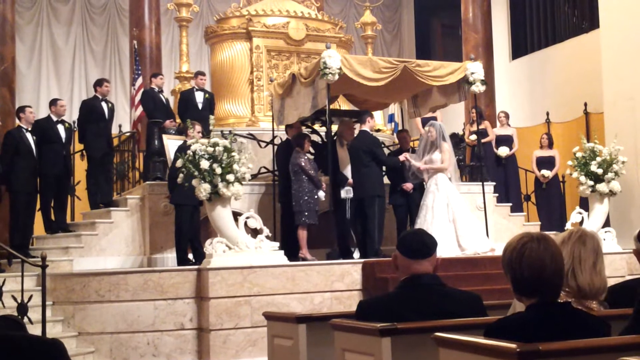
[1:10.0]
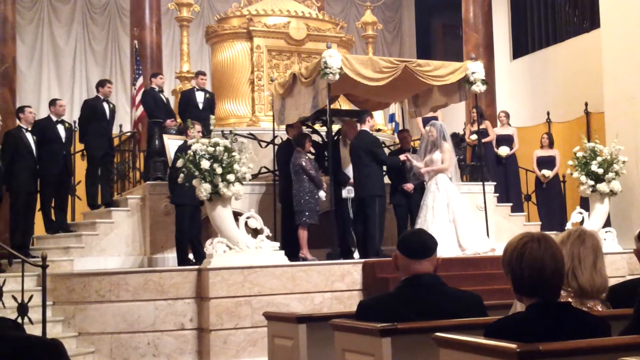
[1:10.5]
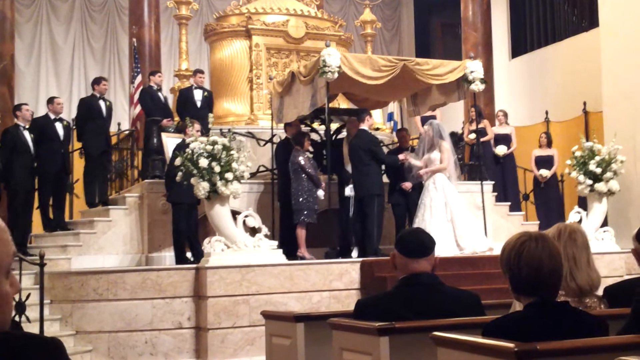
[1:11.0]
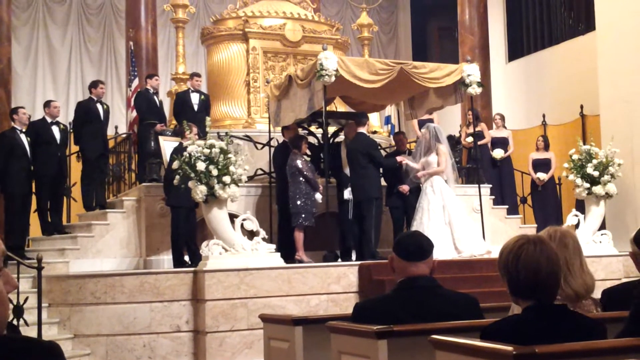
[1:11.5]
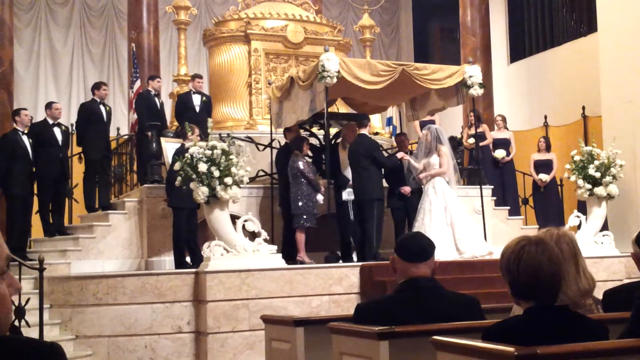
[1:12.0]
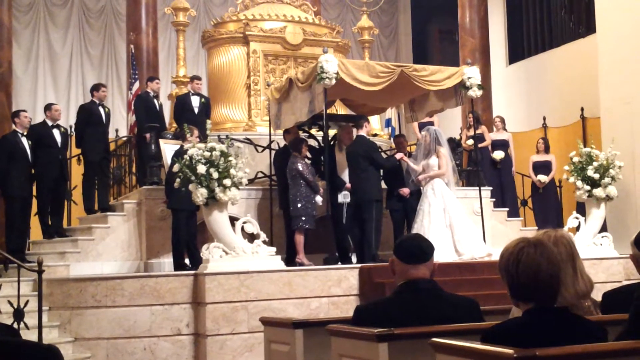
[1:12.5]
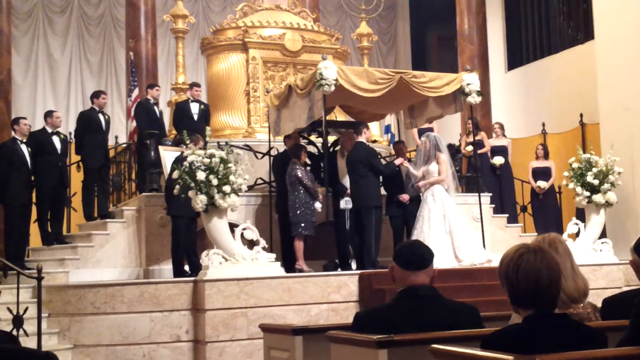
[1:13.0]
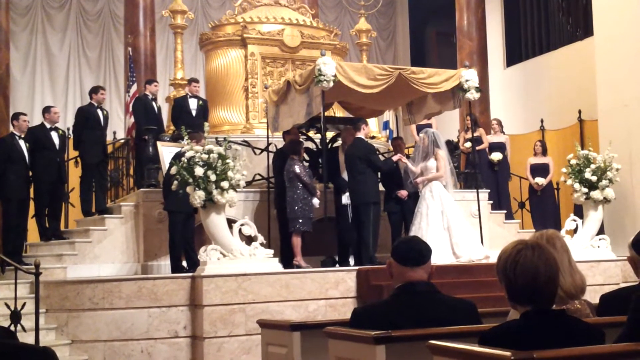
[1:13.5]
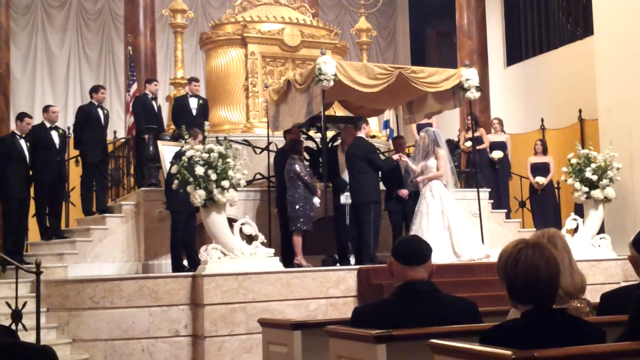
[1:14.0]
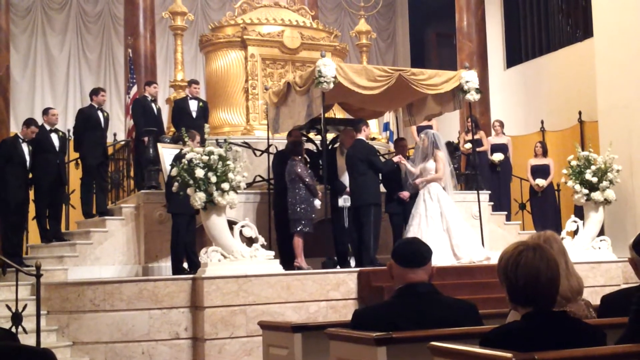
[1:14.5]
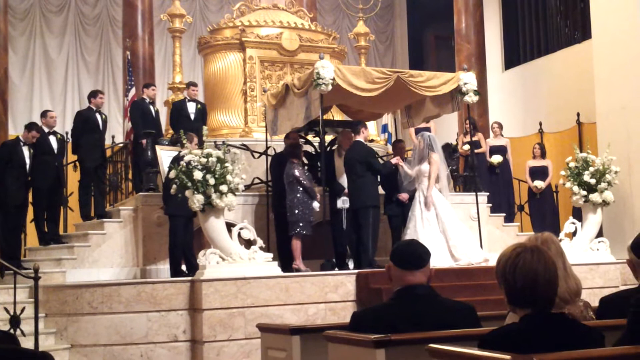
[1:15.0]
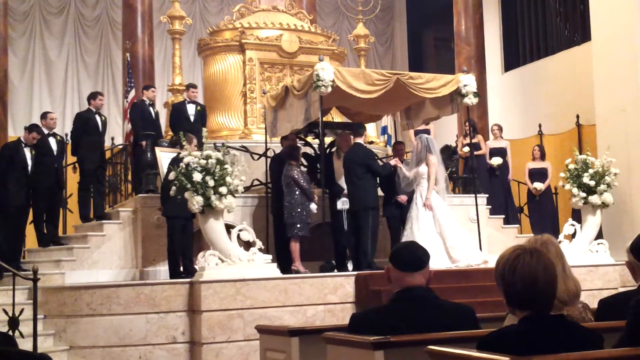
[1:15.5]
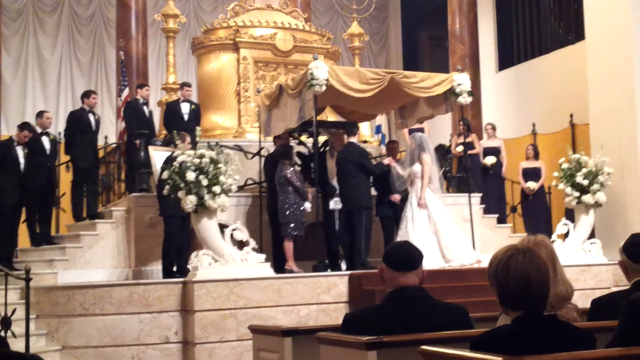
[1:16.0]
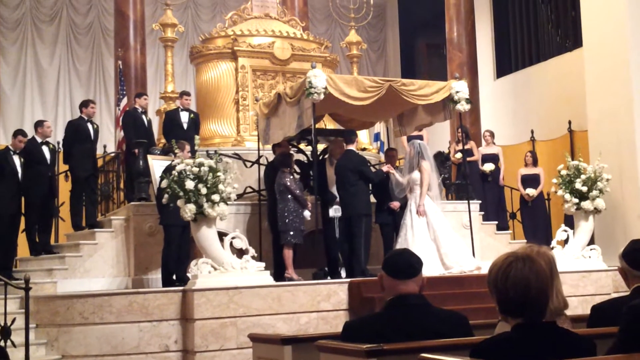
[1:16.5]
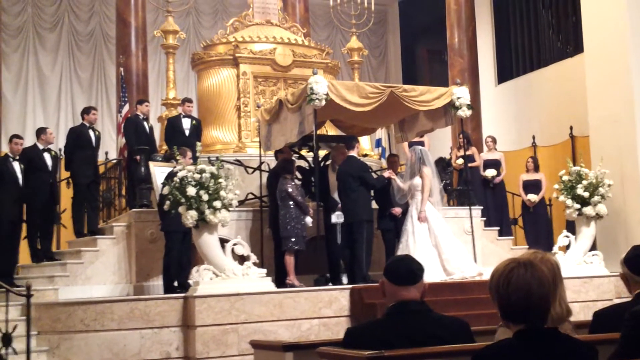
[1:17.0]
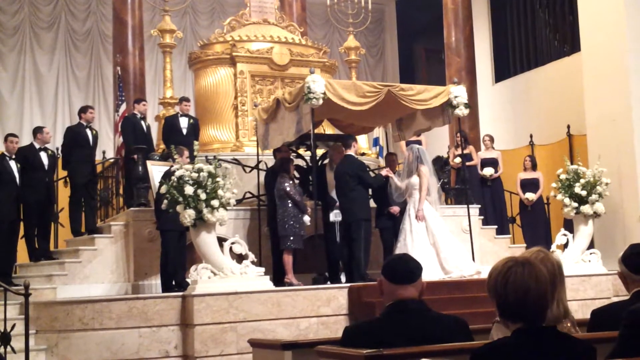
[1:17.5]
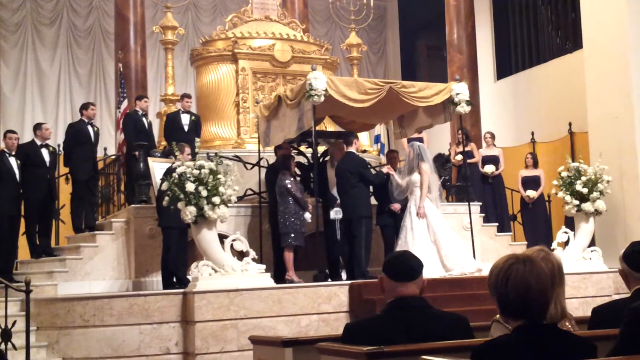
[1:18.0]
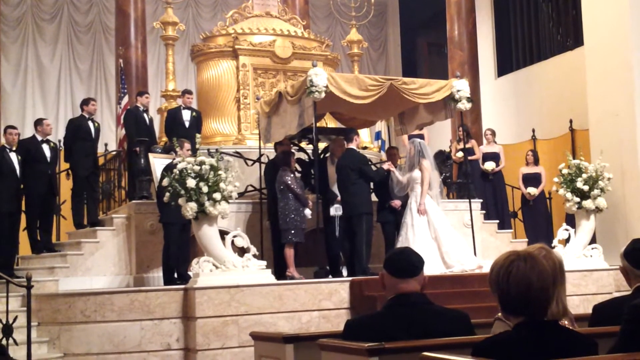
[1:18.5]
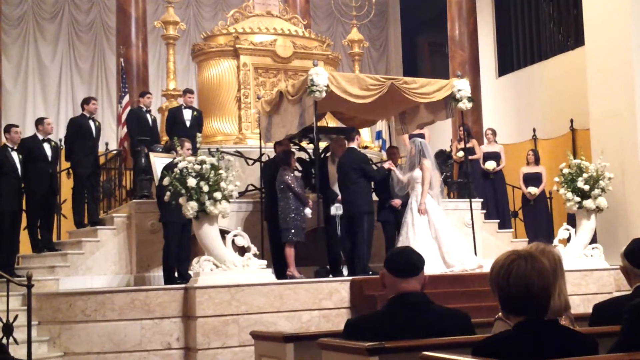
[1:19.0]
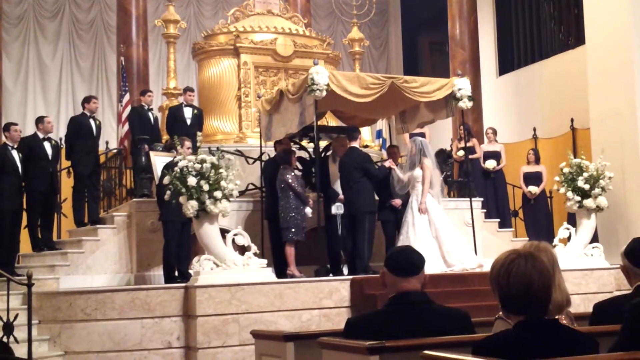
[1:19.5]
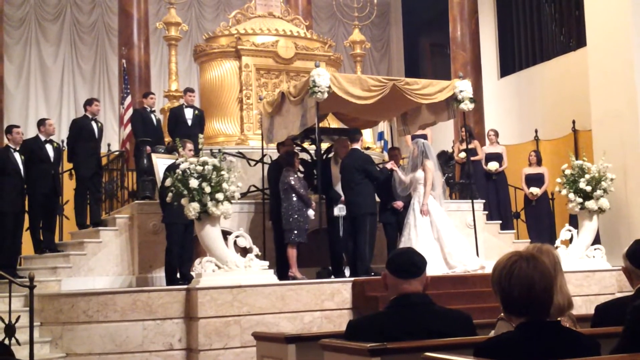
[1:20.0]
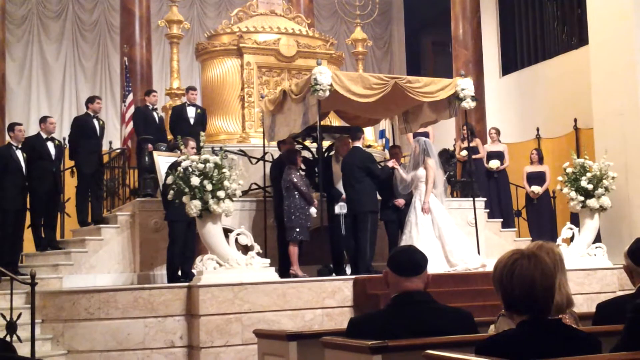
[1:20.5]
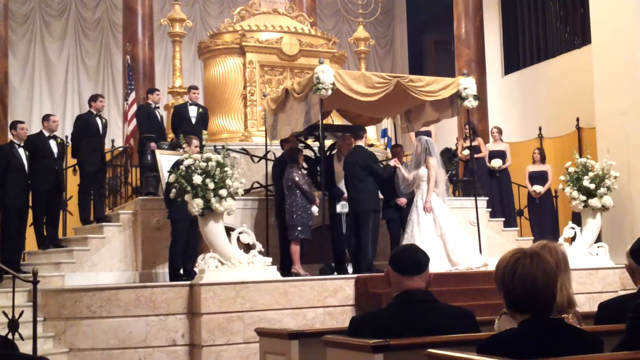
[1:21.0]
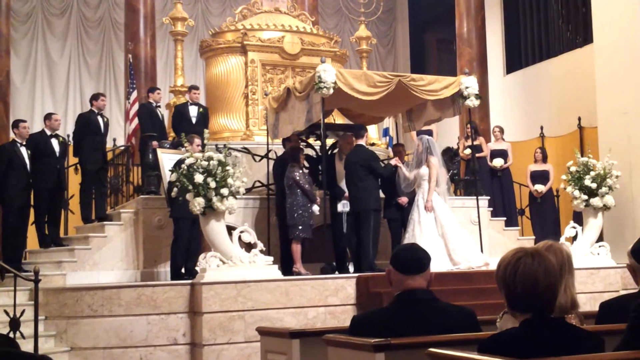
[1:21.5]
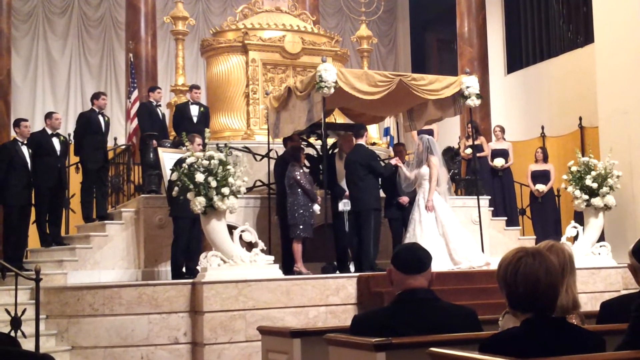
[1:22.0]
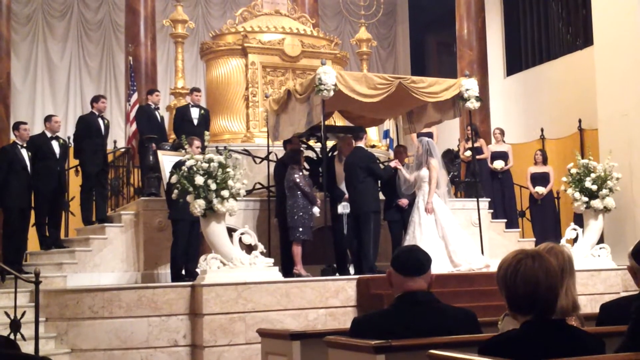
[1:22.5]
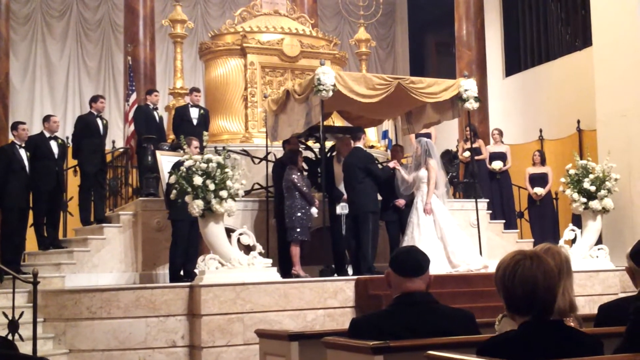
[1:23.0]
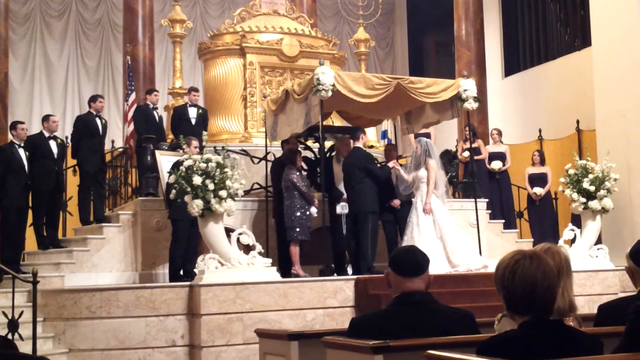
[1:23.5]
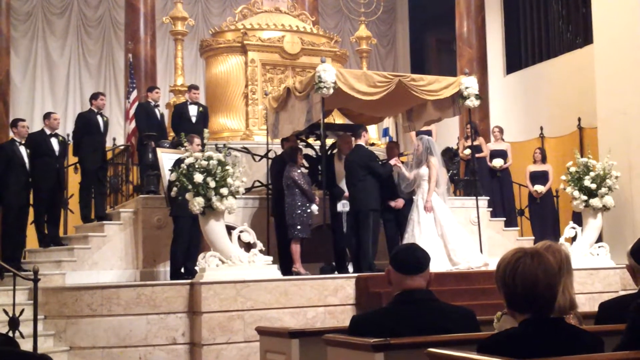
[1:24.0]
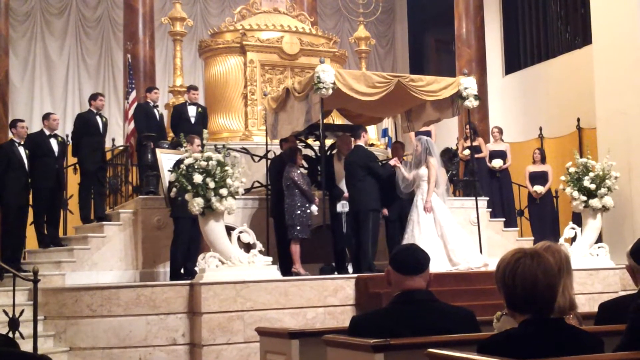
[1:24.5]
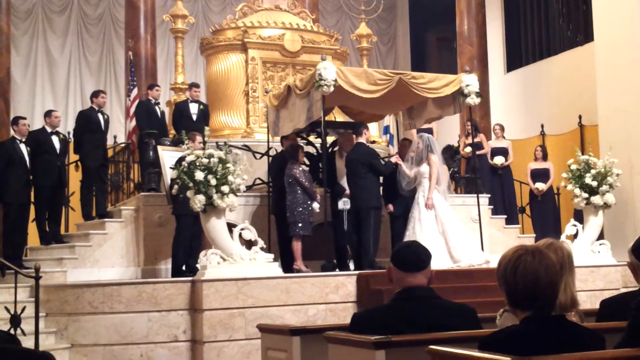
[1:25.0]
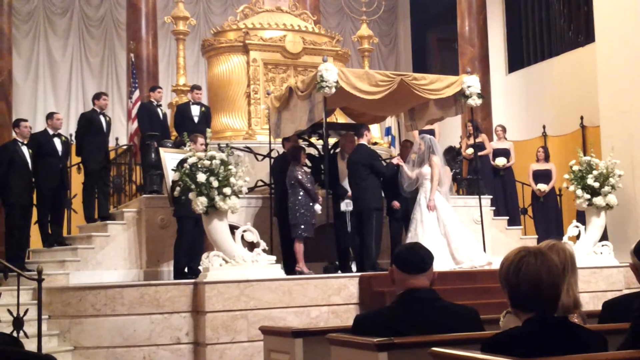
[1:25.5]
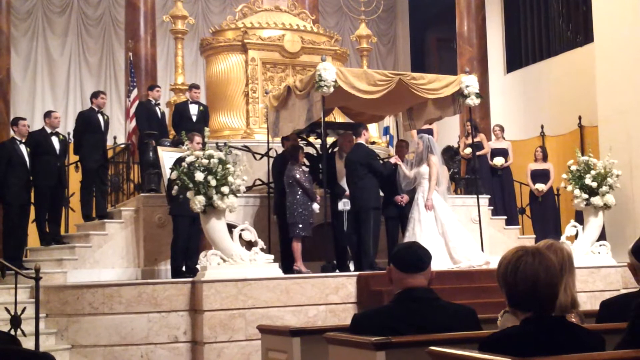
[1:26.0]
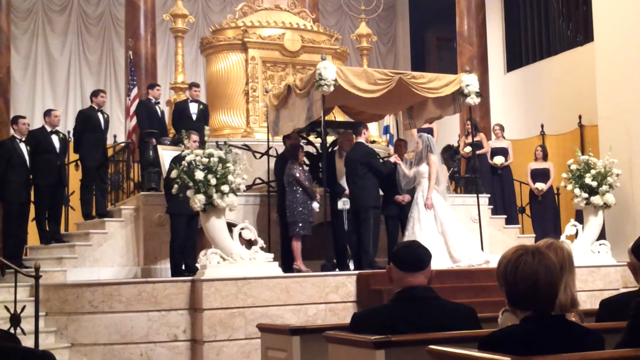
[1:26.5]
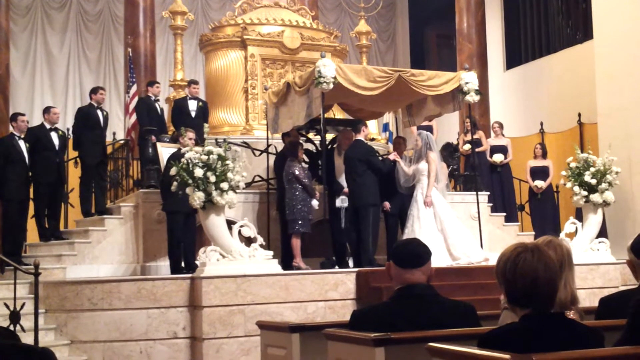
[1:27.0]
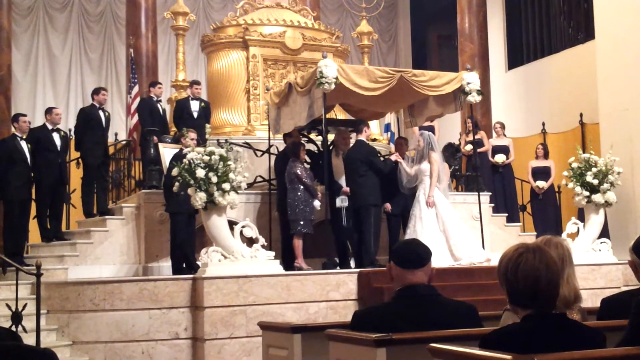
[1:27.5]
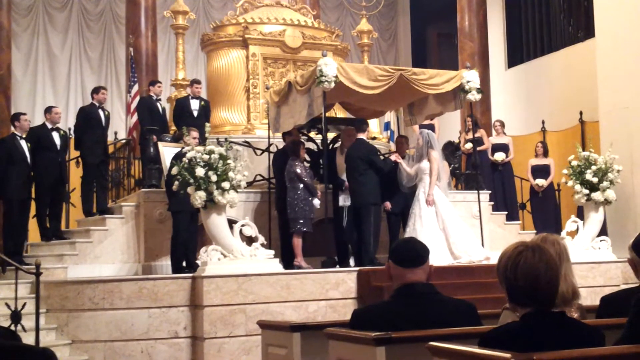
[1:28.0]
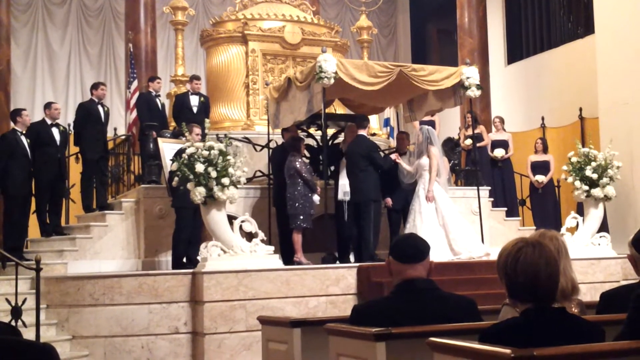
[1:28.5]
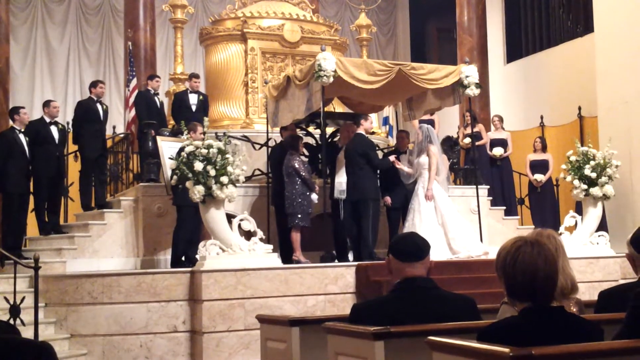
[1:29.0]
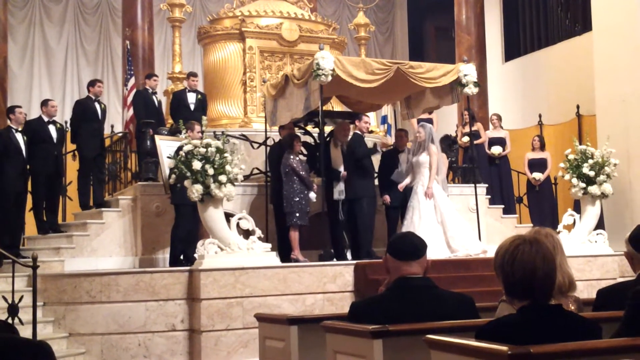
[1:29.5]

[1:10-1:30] The wedding ceremony in the church is seen from behind some pews facing the altar, with a few people in the pews facing the altar. There is a red carpeted floor, with stone or marble stairs leading up to the altar. Off to the sides of the altar, stairs lead up and back, with the groomsmen on the left and the bridesmaids on the right. The altar is made up of a canopy with golden fabric on the top and two elegant vases with bouquets of flowers off to the sides. Under the canopy, the minister faces the bride and groom, speaking and performing the ceremony. The bride and groom, in traditional attire, face each other, with a few other people under the canopy with them, likely the witnesses to the ceremony. The camera work is slightly shaky throughout. The bride places the ring on the groom's finger; they then hold hands and face the minister.